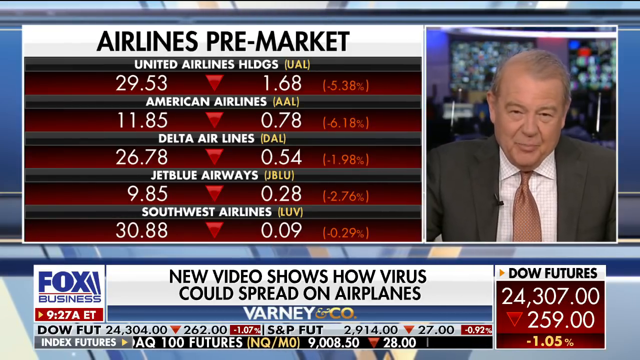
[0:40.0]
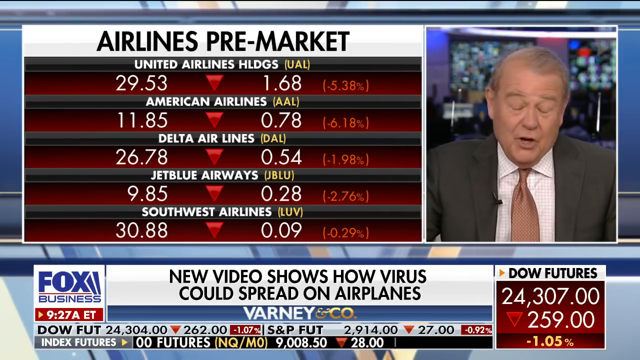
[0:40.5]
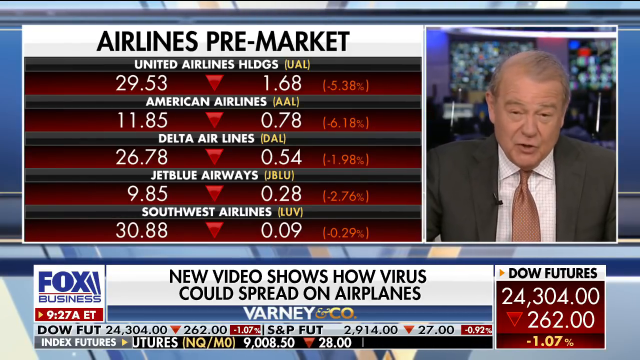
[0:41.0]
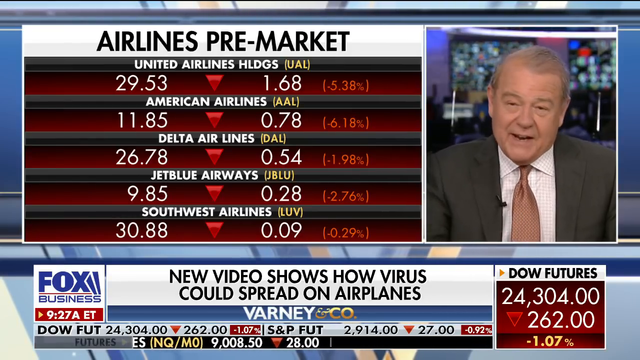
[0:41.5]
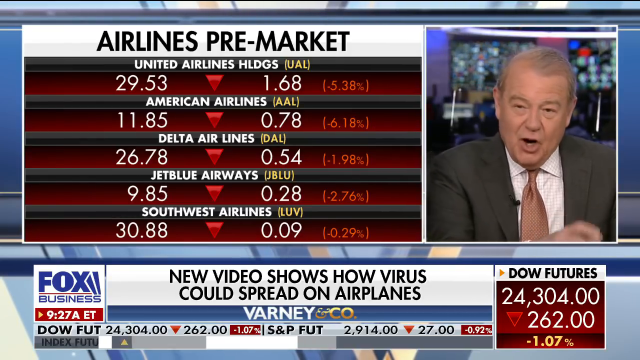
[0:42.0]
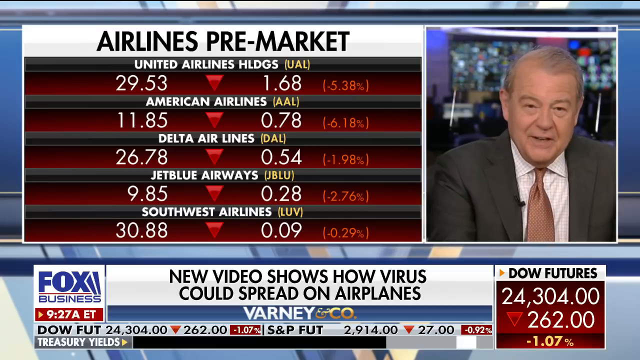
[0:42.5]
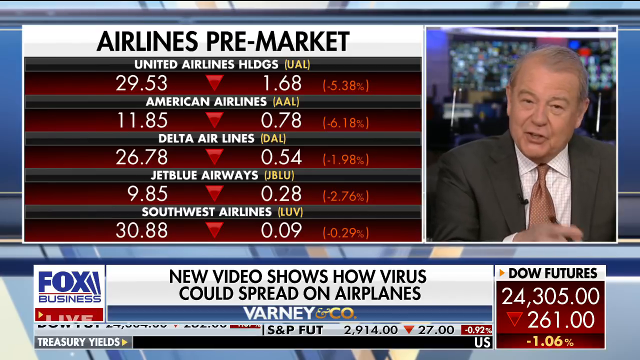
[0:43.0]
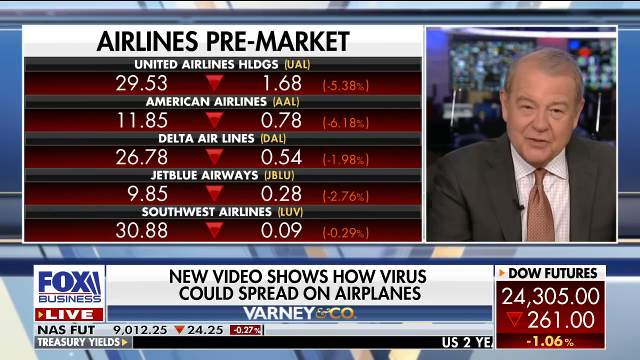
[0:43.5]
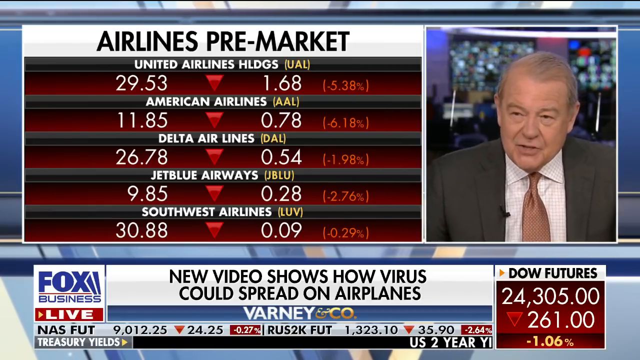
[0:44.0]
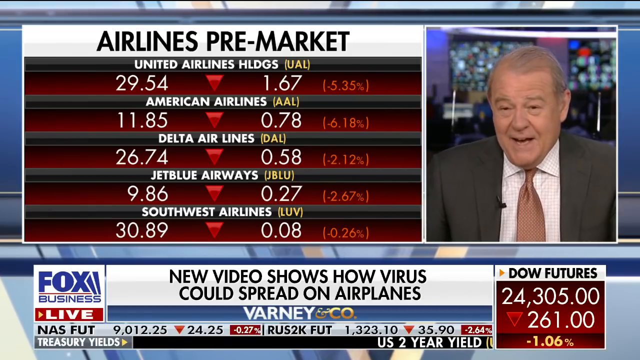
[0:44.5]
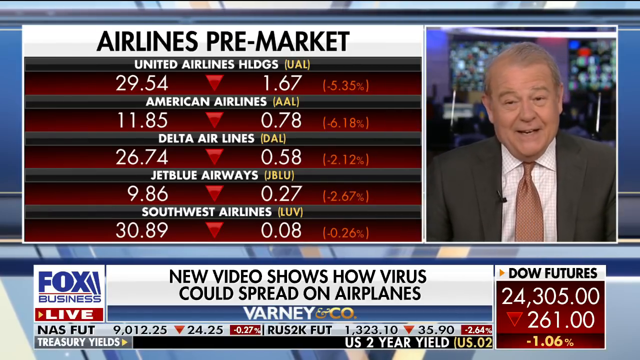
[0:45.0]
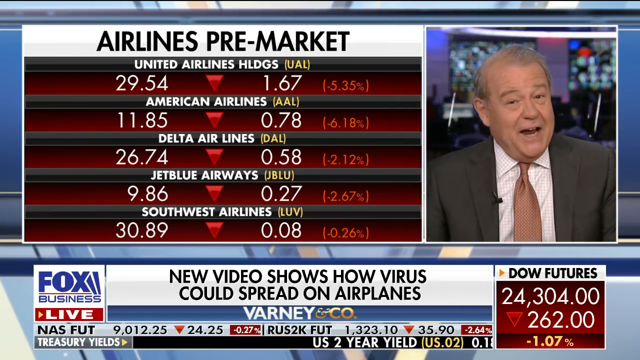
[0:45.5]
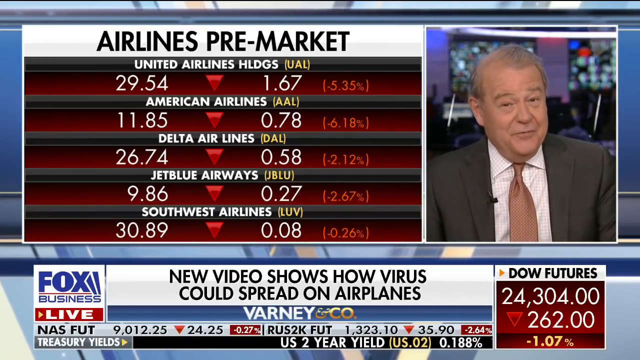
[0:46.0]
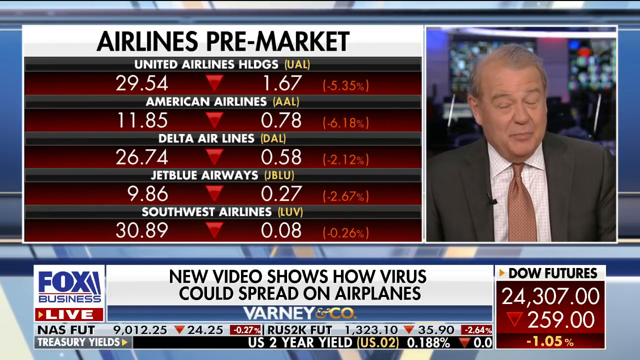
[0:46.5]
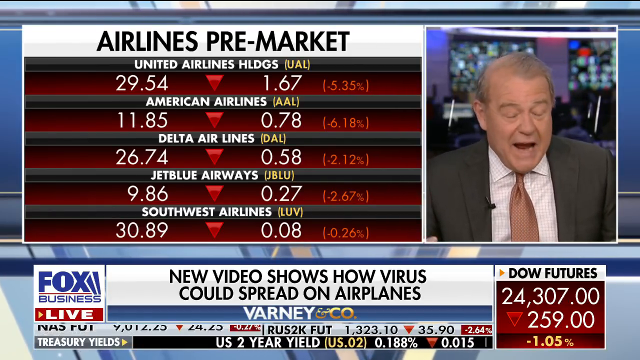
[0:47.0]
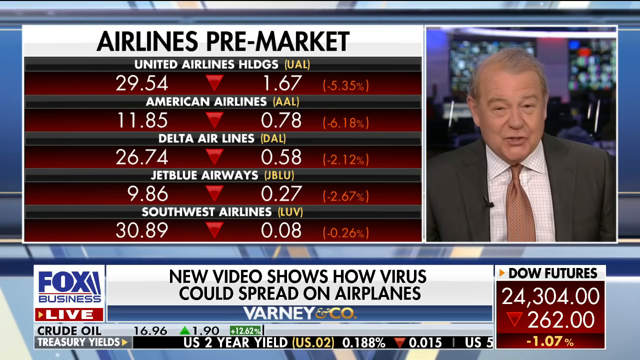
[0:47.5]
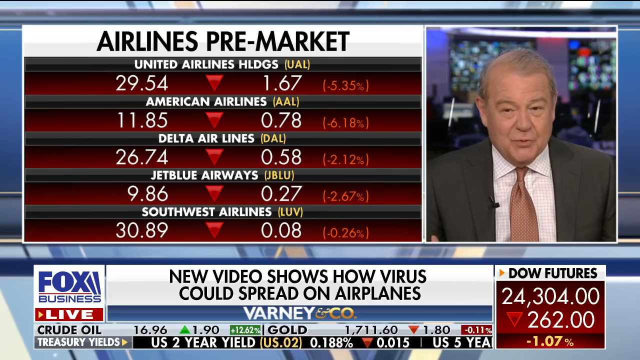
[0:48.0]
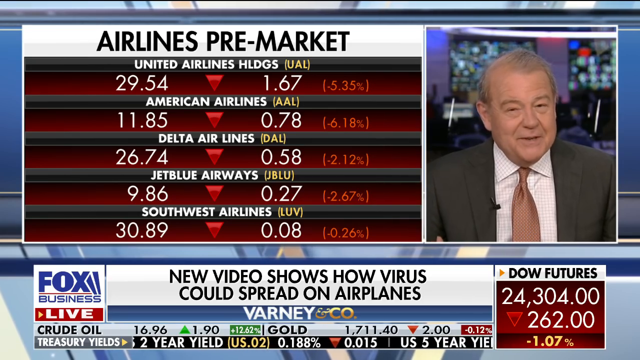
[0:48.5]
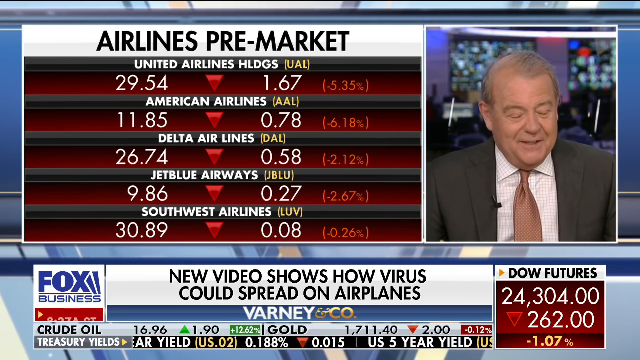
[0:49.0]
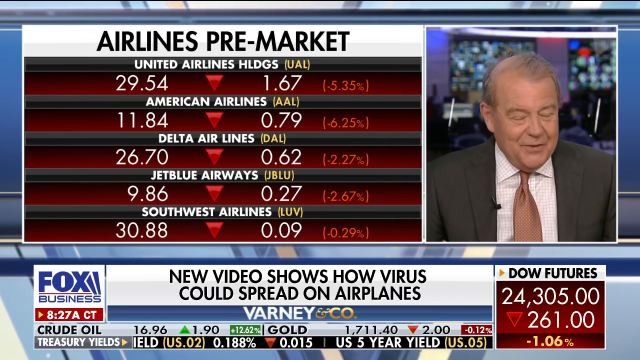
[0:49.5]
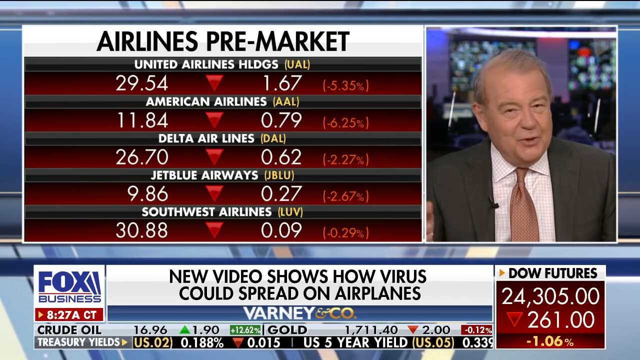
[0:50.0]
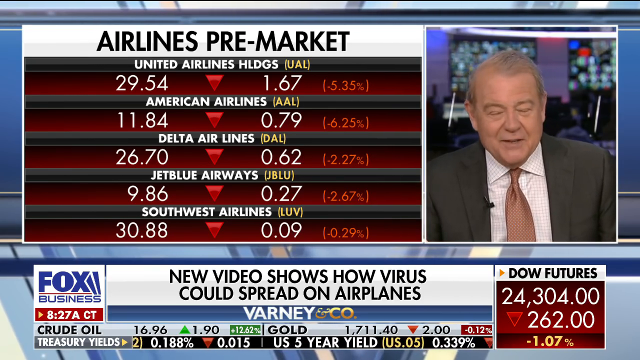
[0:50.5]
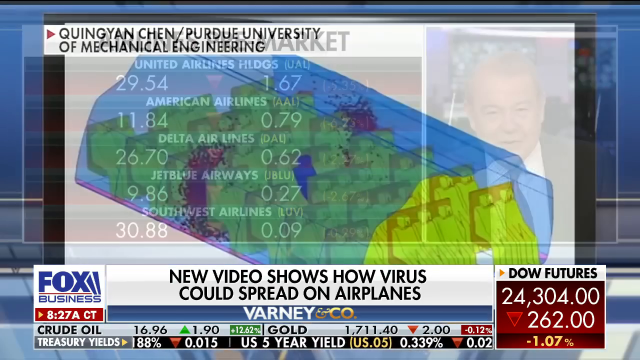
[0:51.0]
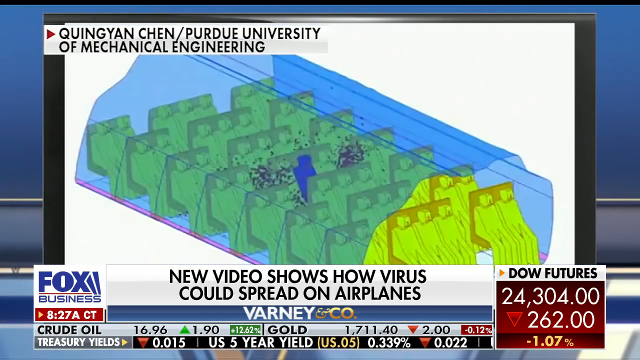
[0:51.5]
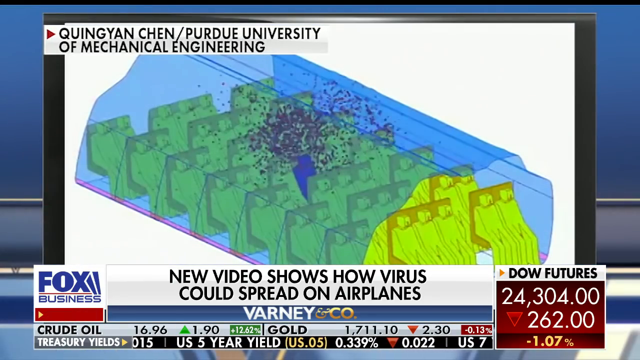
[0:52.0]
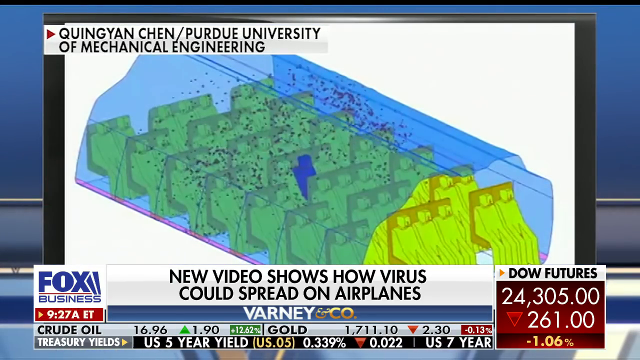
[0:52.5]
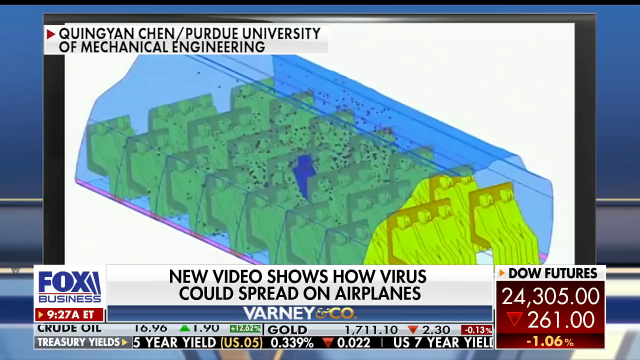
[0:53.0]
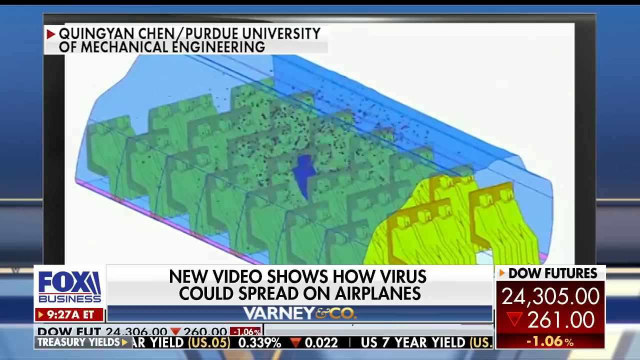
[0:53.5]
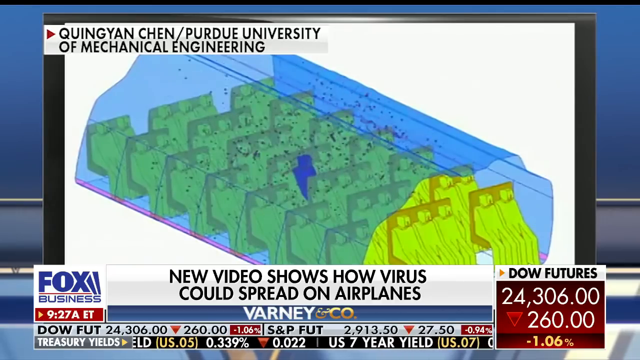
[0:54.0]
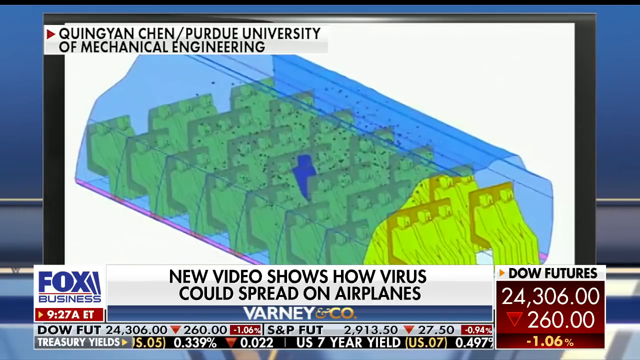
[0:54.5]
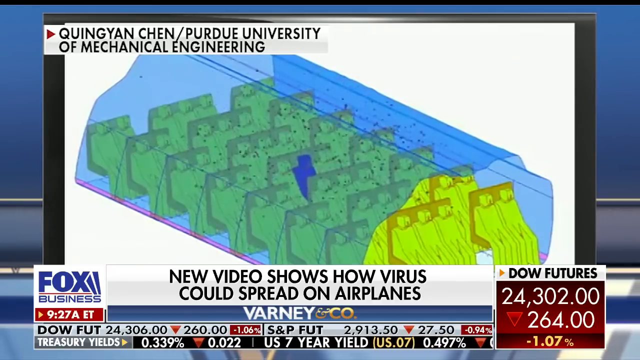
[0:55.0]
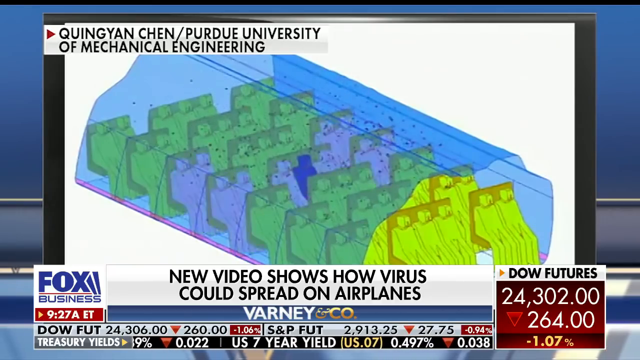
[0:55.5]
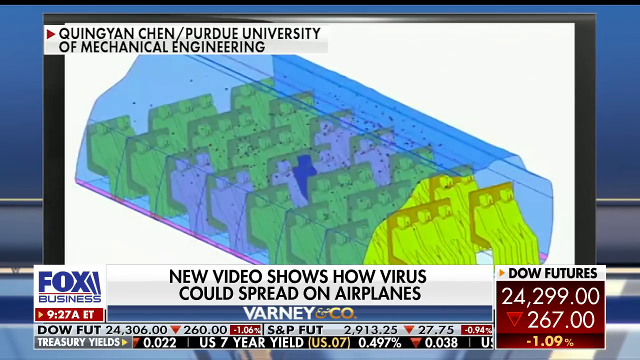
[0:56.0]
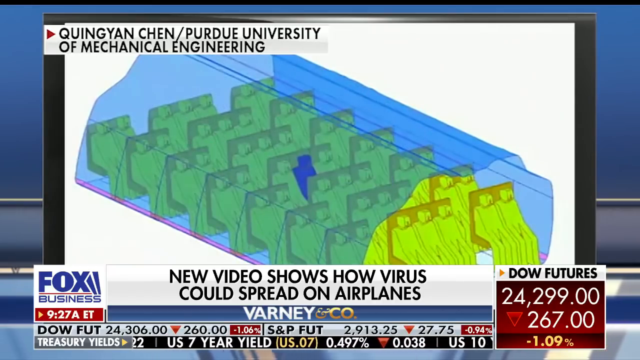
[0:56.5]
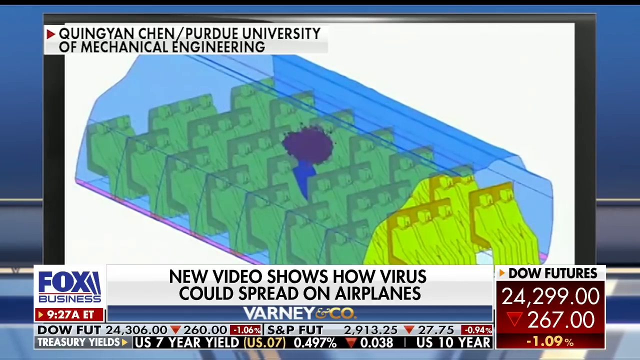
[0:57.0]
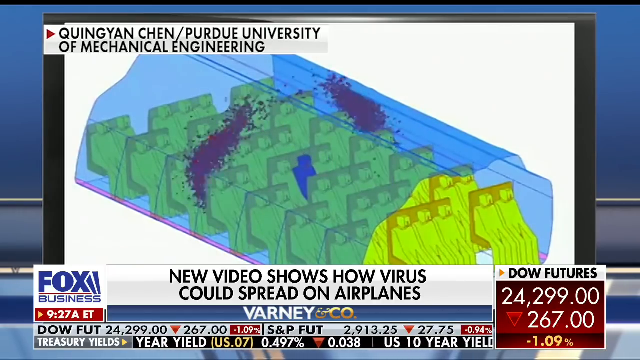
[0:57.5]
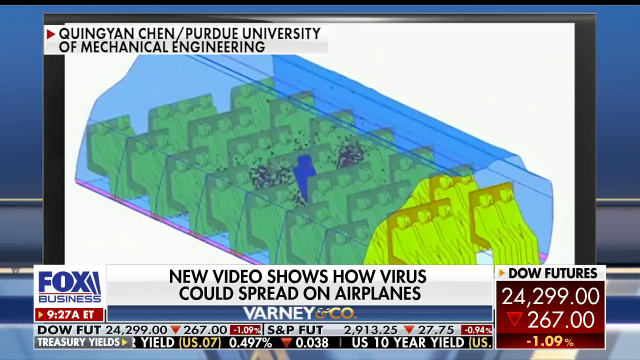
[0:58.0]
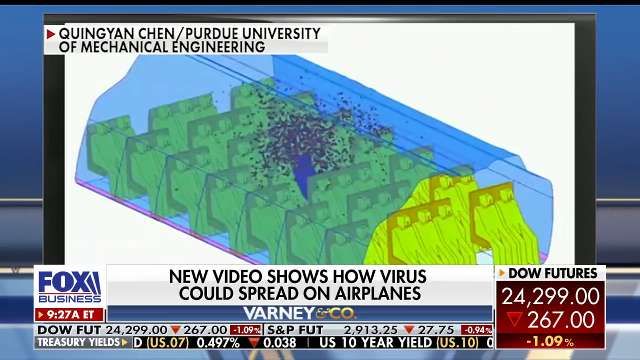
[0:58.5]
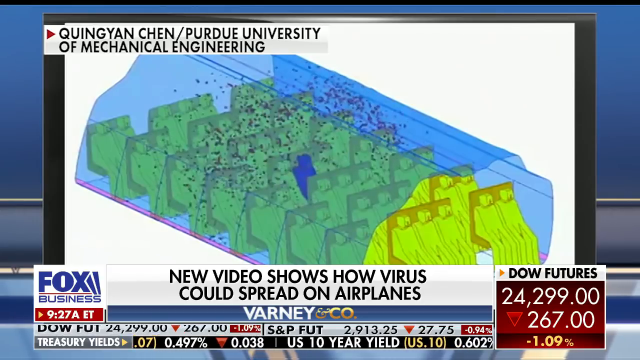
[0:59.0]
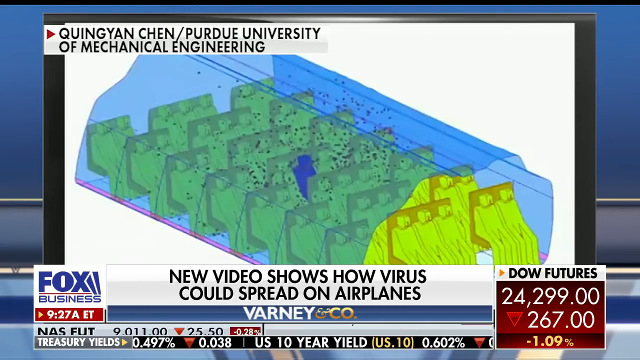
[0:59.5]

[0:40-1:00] In the video insert on the right, the news anchor is an older man in a business suit with a very expressive face. On the left is the Airlines Pre-Market chart listing five major airlines, from United Airlines down to Southwest Airlines. The values change, but for the most part all the airlines are down; Southwest Airlines is down 0.26 percent. The scene then fades to the computer model of how viruses spread through airplanes, and the animation repeats. It shows the infected person in the middle of the plane; as they sneeze or cough, the virus spreads, first in large groups, and then scatters until the whole cabin is full of viruses. The passengers closest to the infected person get the most of it, while those in the back or up ahead are still covered with the viruses but do not get infected. The animation then loops again.